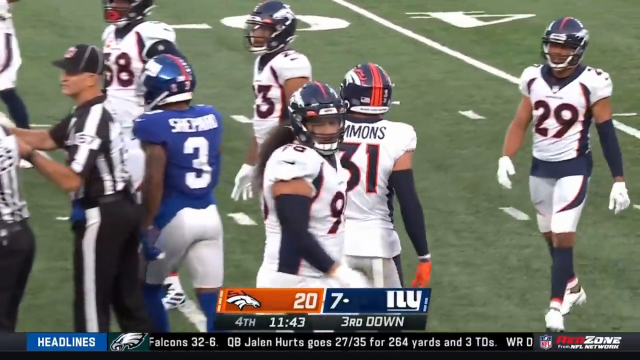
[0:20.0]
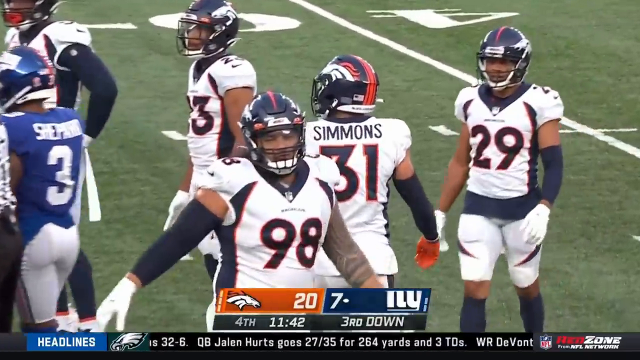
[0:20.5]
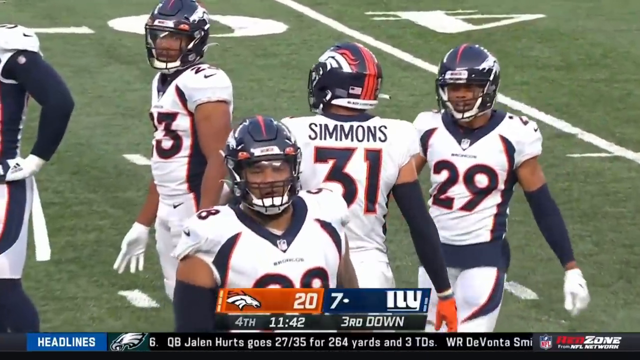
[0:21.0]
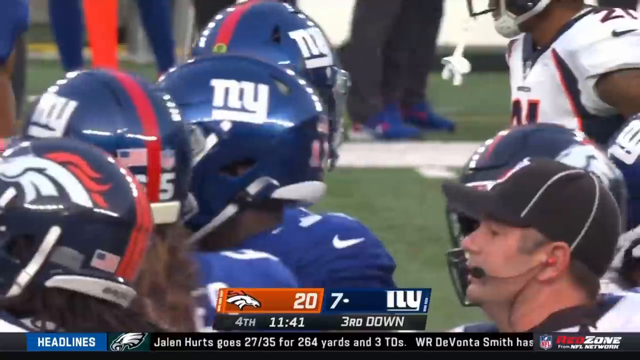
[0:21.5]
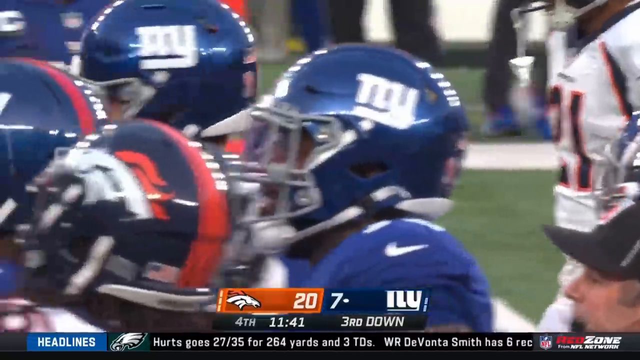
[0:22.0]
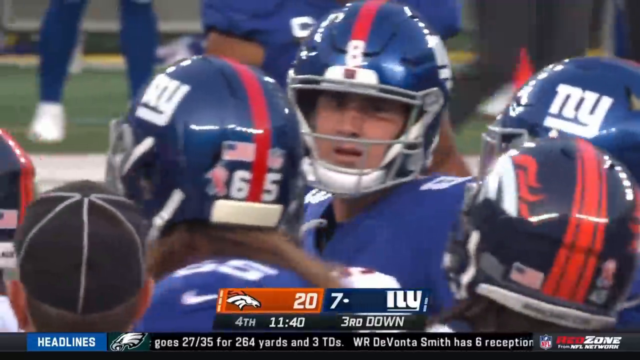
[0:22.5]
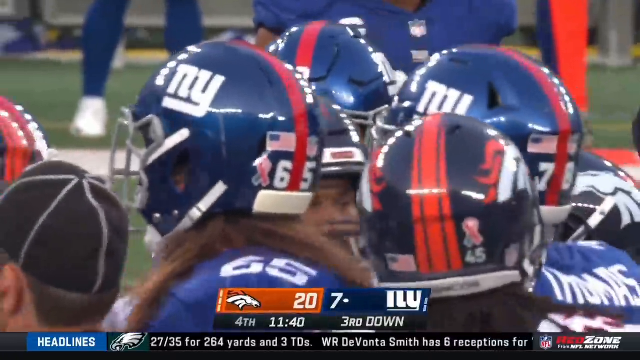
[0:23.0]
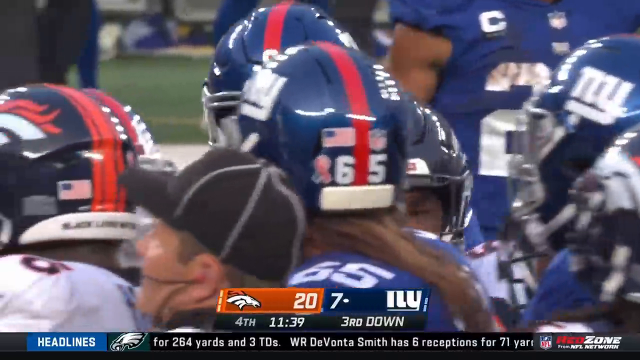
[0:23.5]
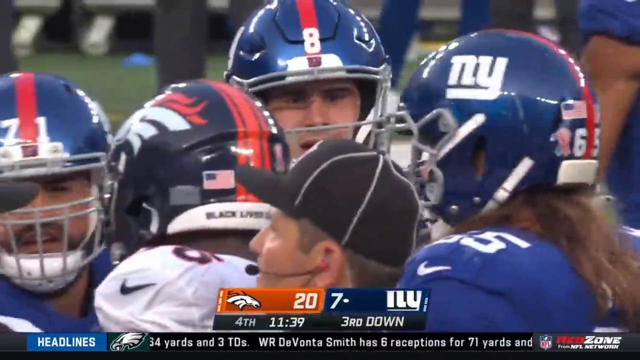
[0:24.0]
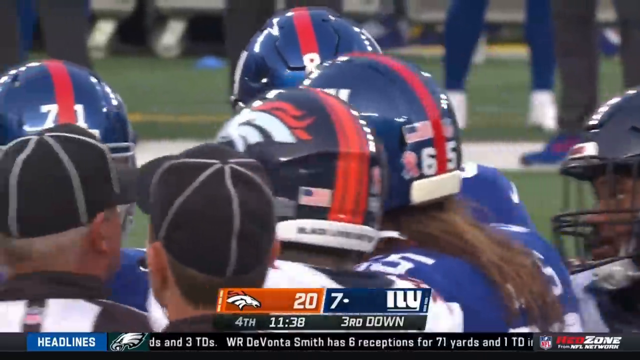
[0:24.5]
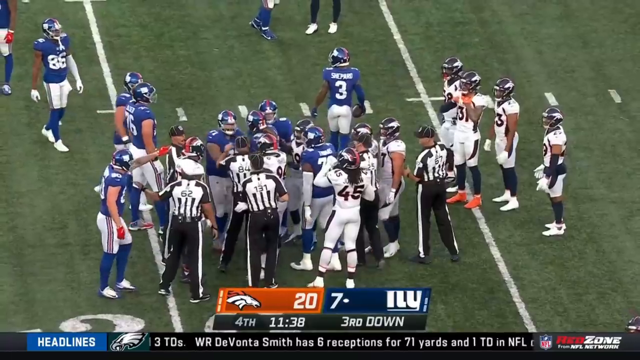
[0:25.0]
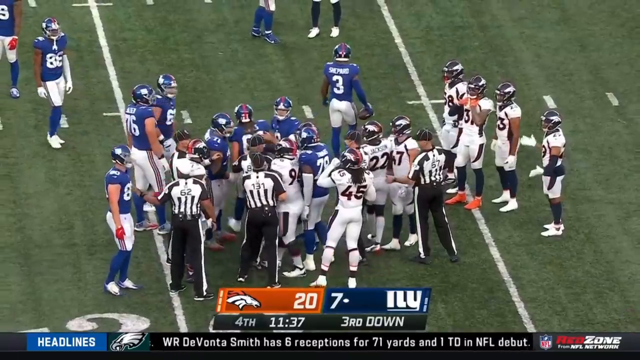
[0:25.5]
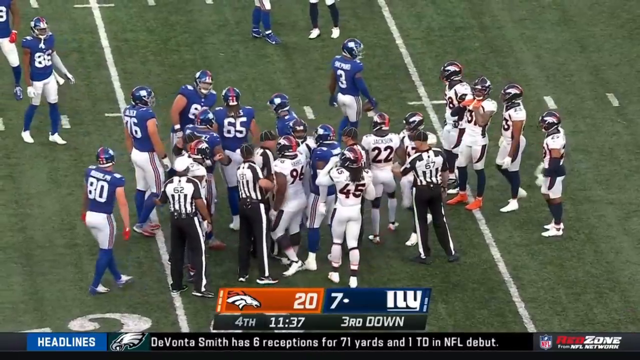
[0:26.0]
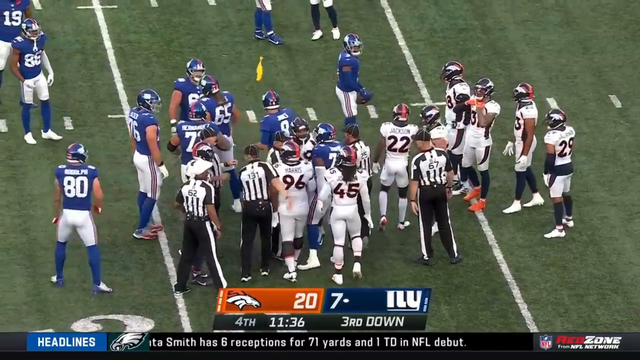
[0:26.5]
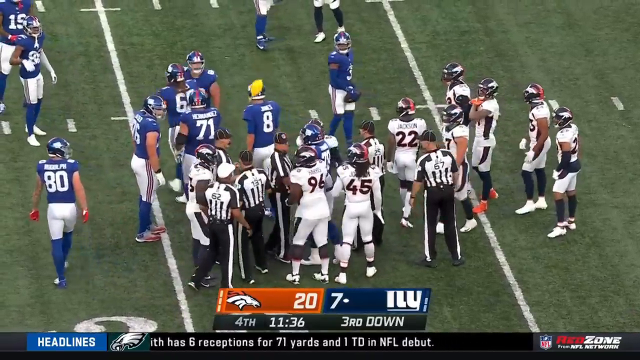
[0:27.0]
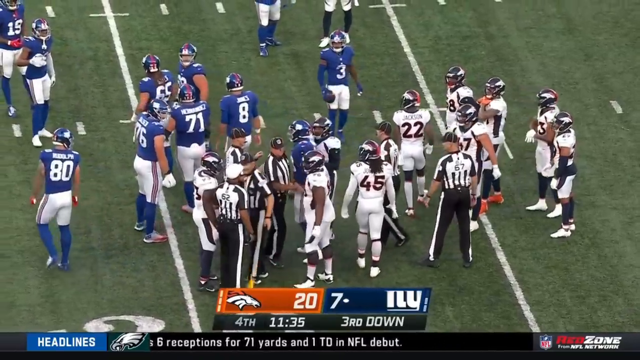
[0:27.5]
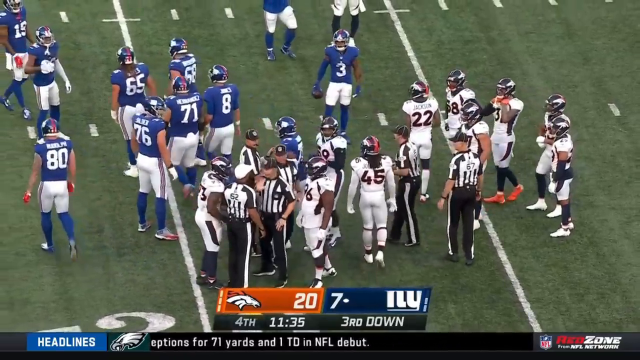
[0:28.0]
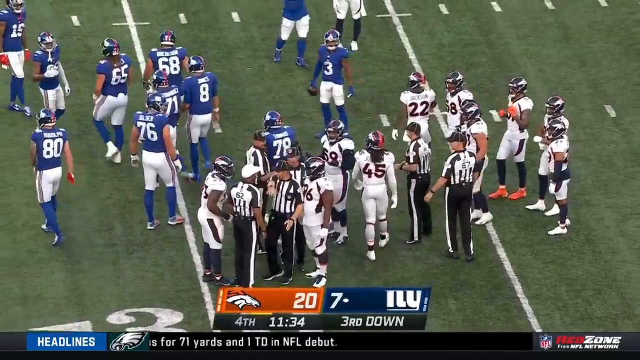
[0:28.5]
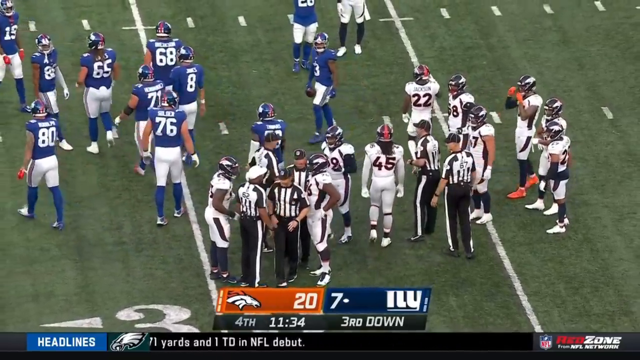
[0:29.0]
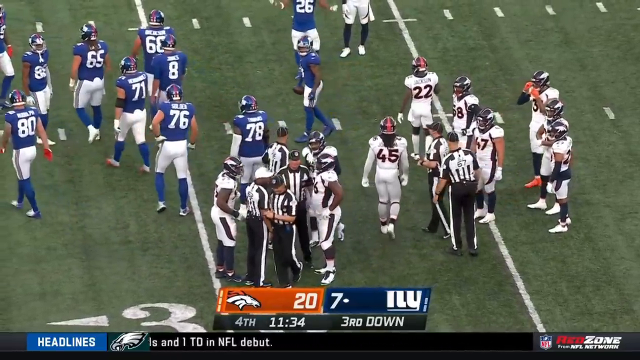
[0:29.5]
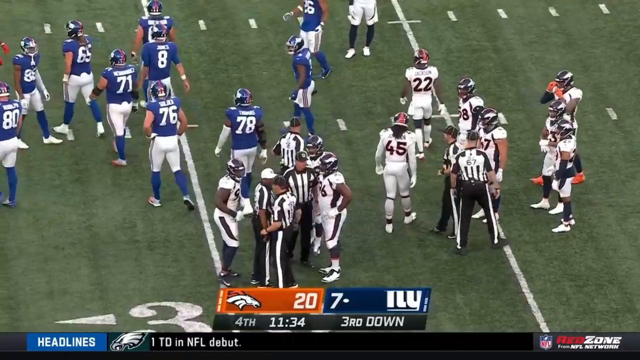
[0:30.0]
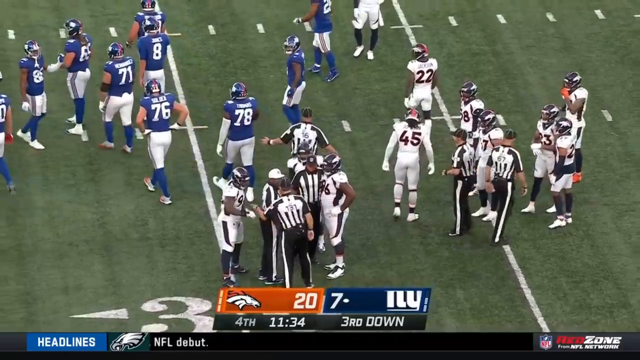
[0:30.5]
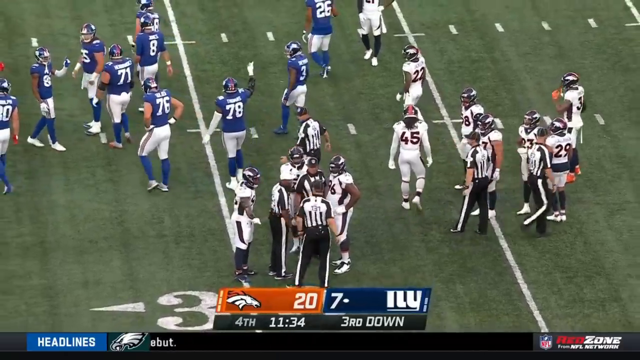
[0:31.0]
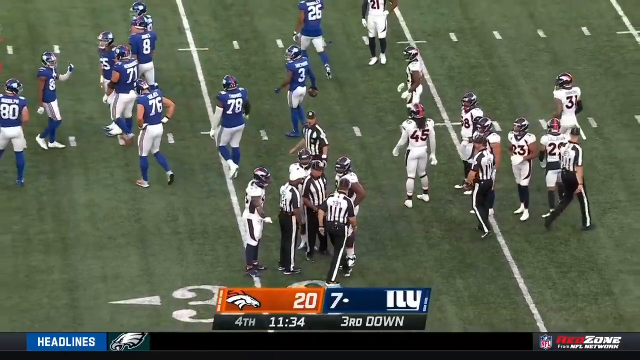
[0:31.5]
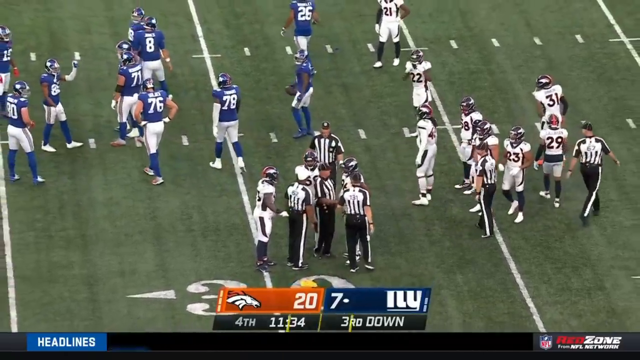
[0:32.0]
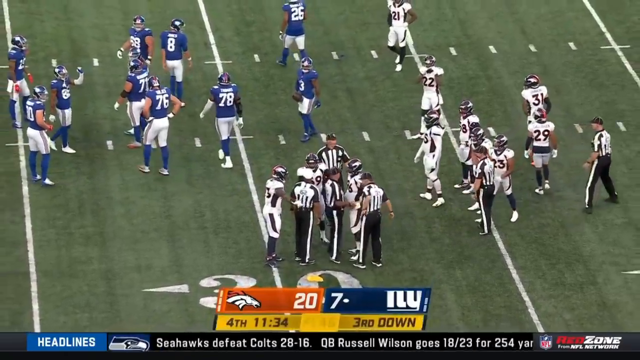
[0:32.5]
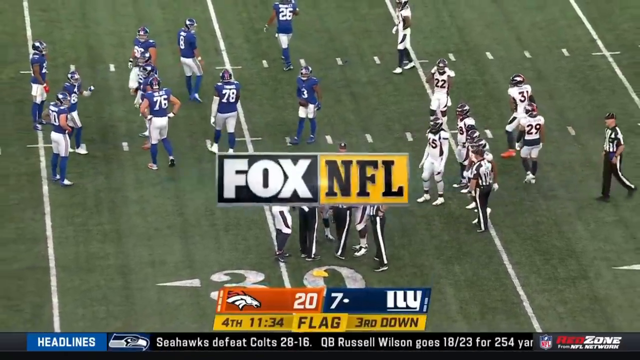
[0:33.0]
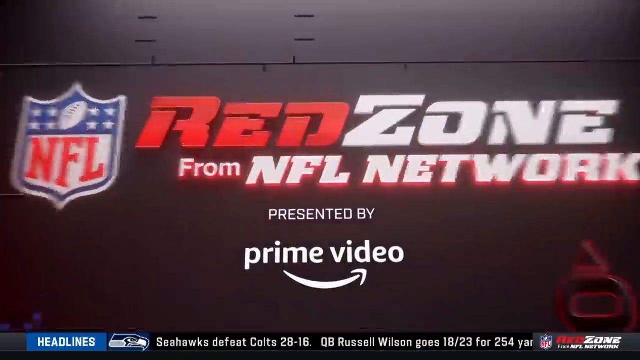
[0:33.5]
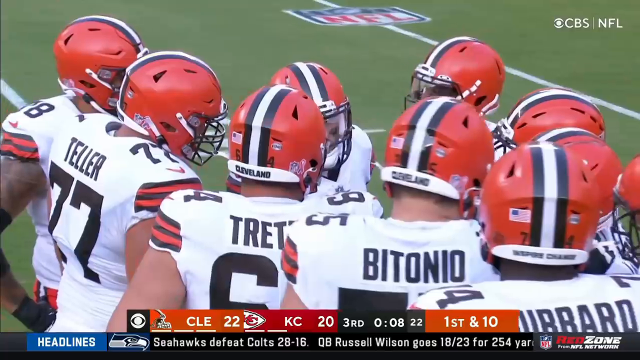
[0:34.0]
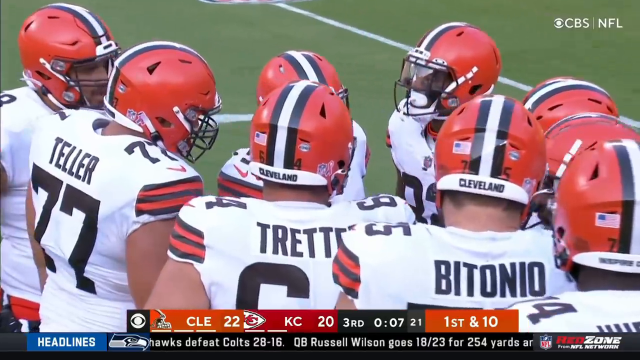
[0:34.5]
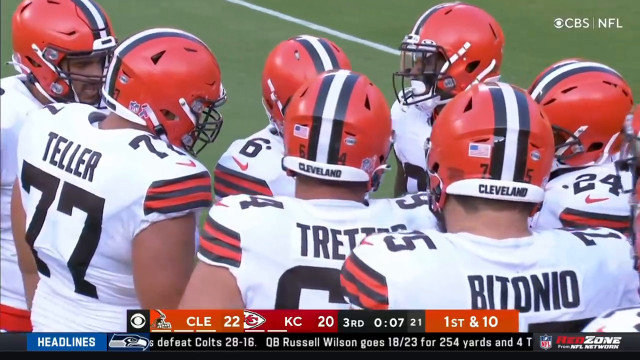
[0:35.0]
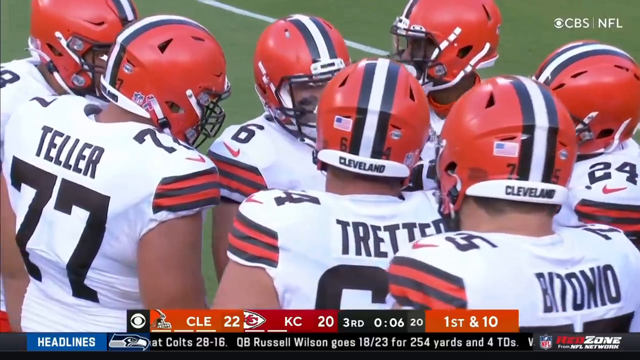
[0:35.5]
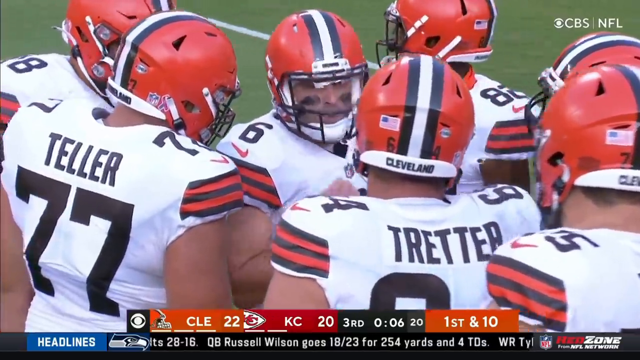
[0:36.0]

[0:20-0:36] The video focuses on Simmons, with several other Broncos players around him, and Simmons walks away from the camera. The scene then focuses on some of the New York Giants players, mostly showing their helmets, and apparently focuses on the quarterback who got hit. The teams are huddled up: the Giants appear to be huddled together, with some members of the Broncos huddled on the right side. A yellow flag appears to have been thrown onto the field. Referees, apparently five of them, are gathered near the center of the scene, at about the 30-yard line. The score underneath reads 20 Broncos to 7 New York Giants, and below that it says "4th quarter" with 11:34 to go; it is 3rd down. At the bottom of the score, what looks like a yellow flag notification reads "flag", and a Fox NFL graphic pops up in the middle.